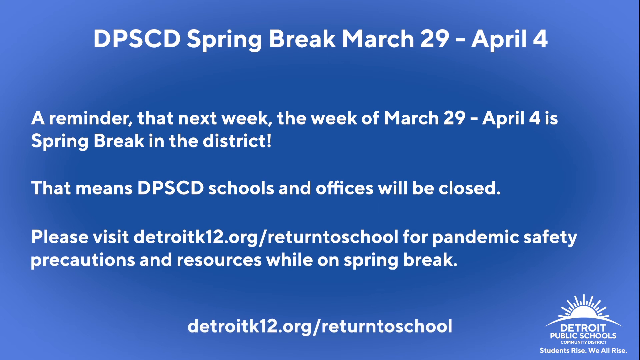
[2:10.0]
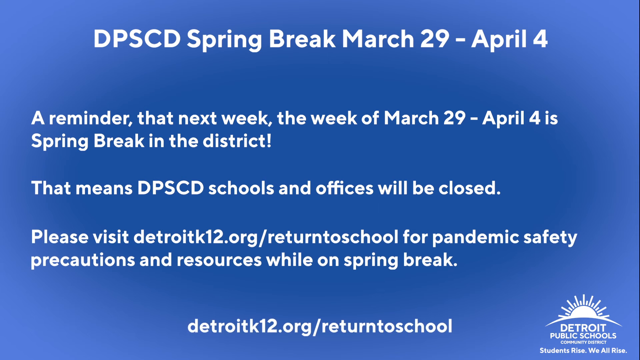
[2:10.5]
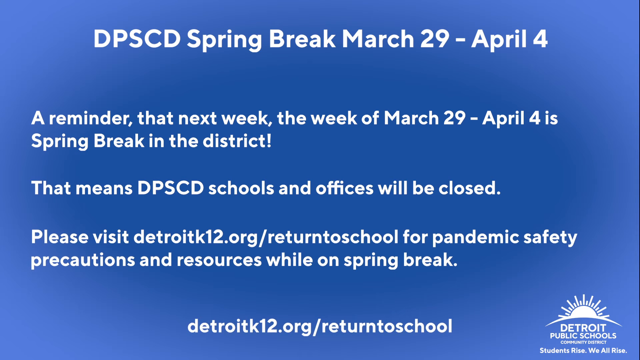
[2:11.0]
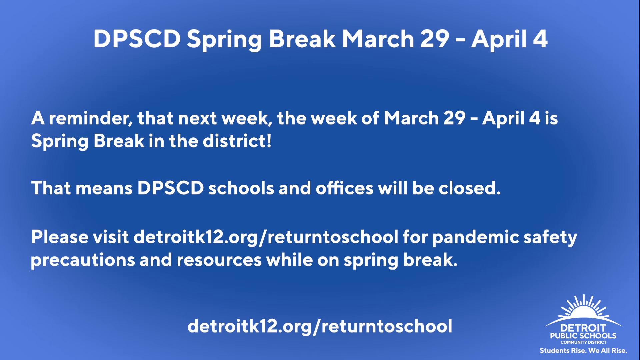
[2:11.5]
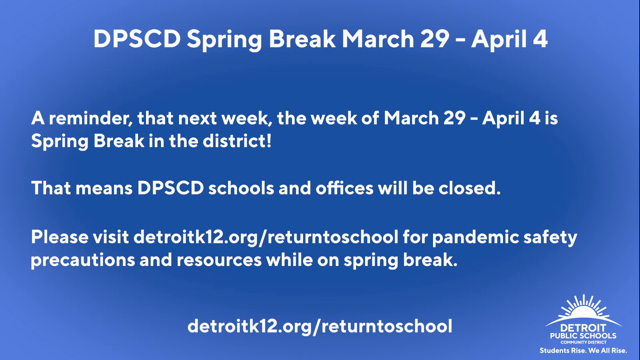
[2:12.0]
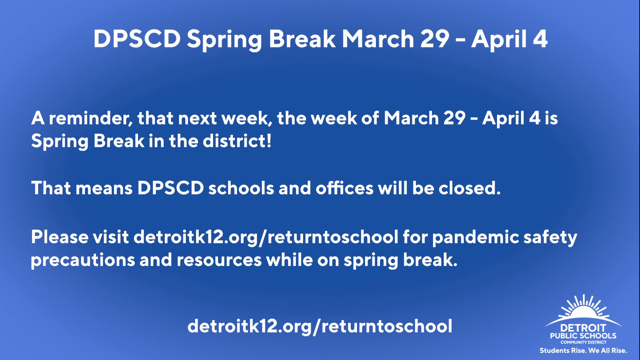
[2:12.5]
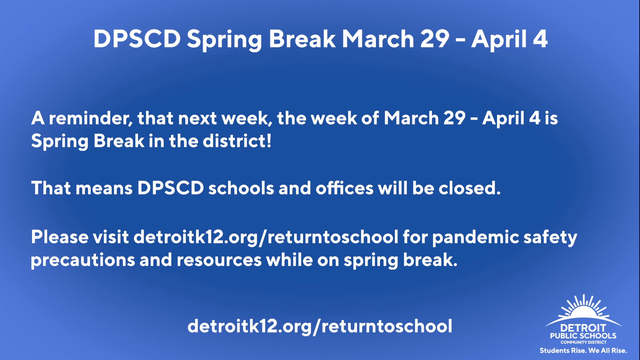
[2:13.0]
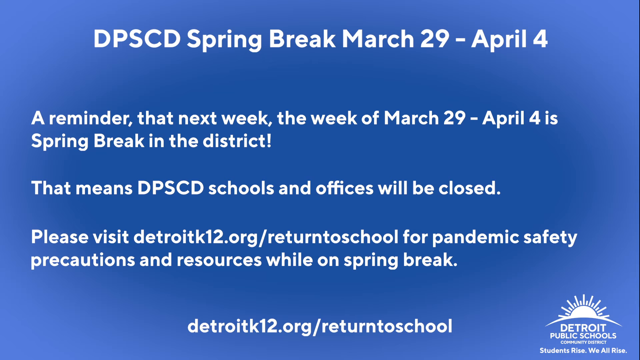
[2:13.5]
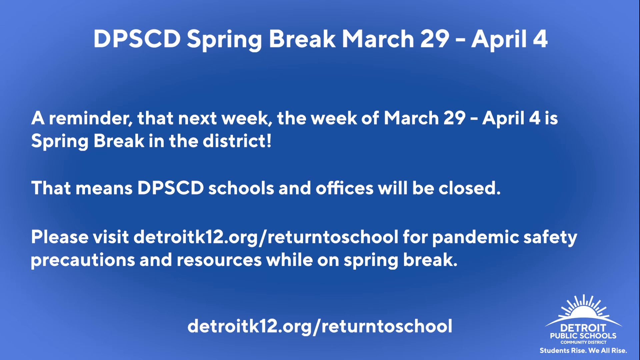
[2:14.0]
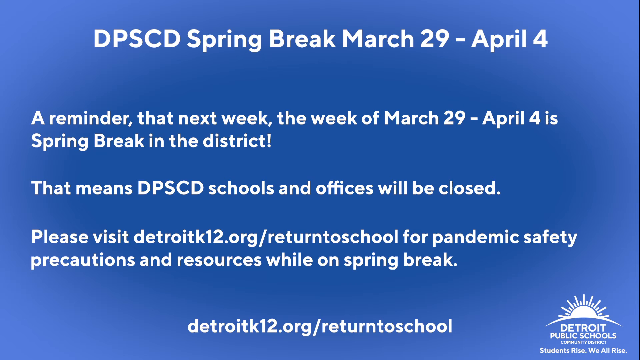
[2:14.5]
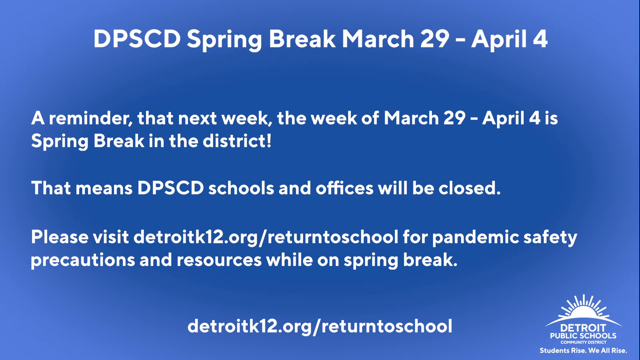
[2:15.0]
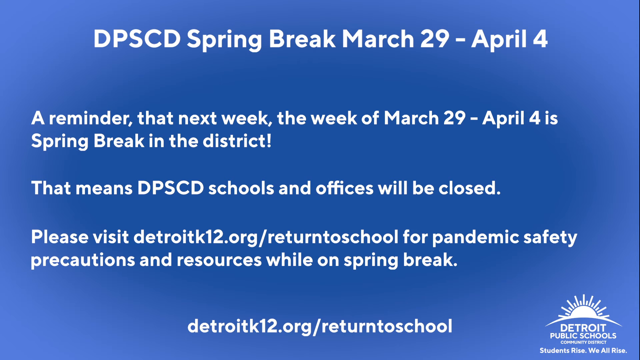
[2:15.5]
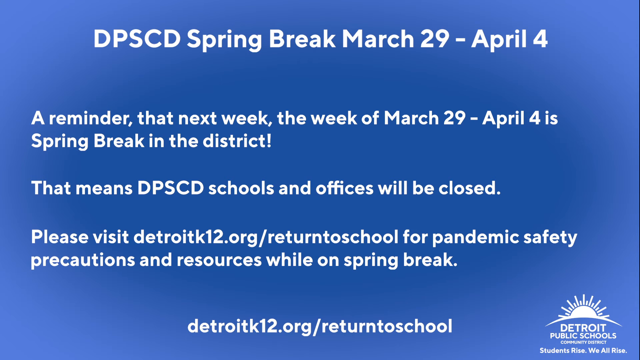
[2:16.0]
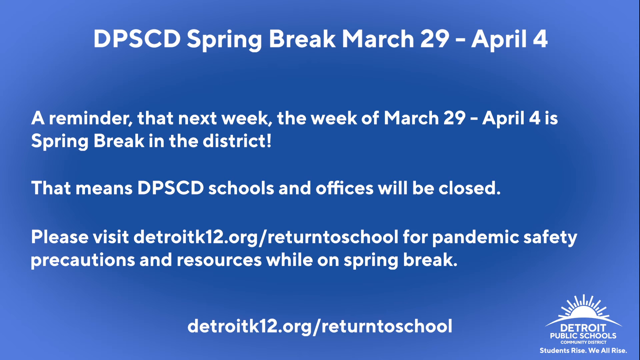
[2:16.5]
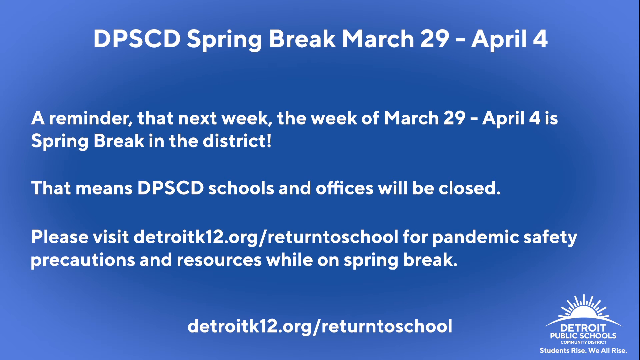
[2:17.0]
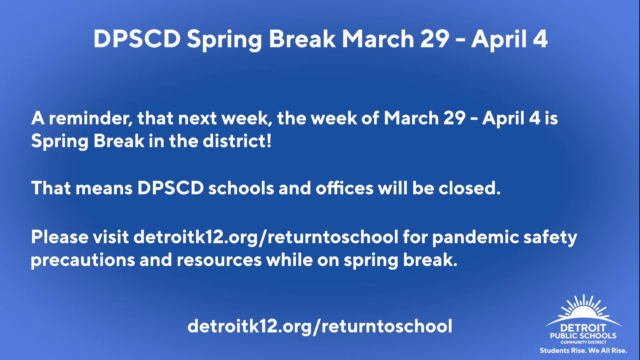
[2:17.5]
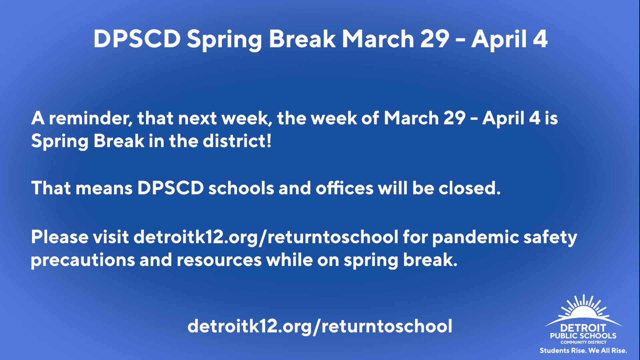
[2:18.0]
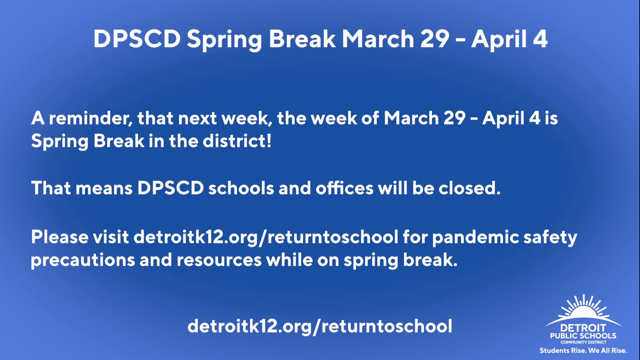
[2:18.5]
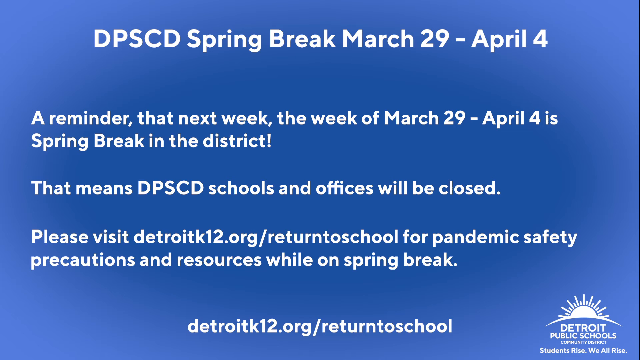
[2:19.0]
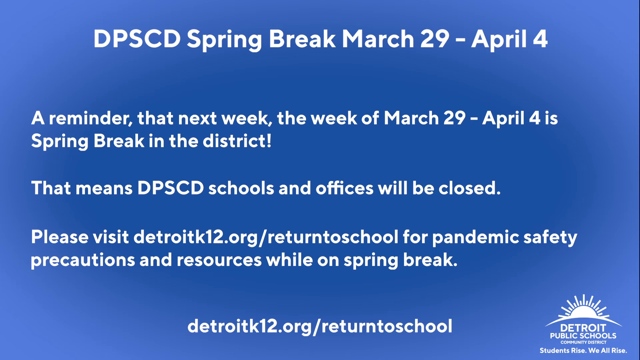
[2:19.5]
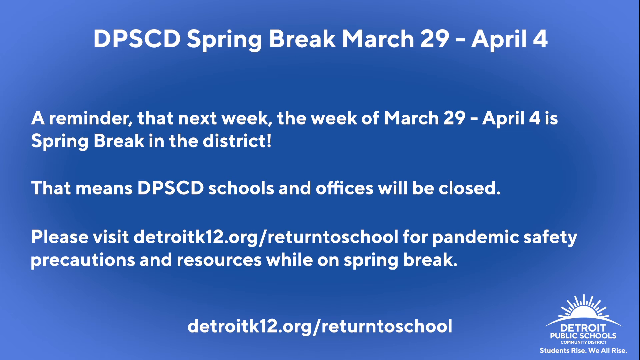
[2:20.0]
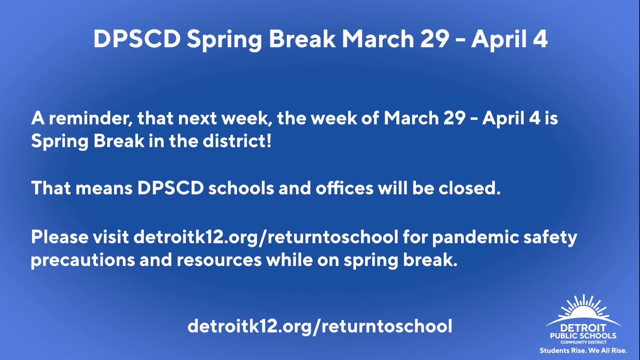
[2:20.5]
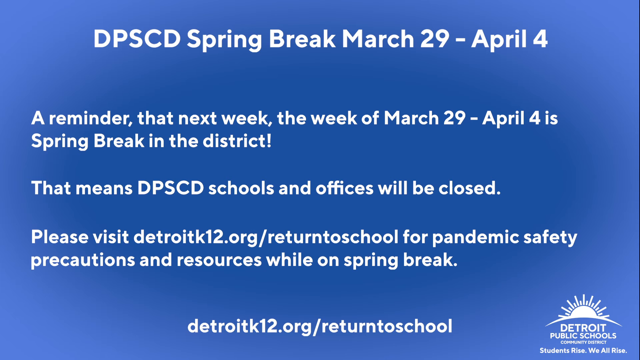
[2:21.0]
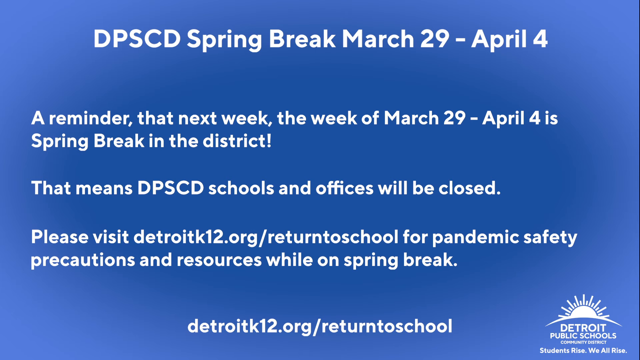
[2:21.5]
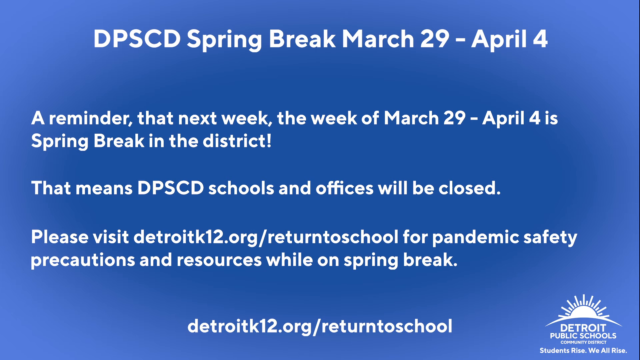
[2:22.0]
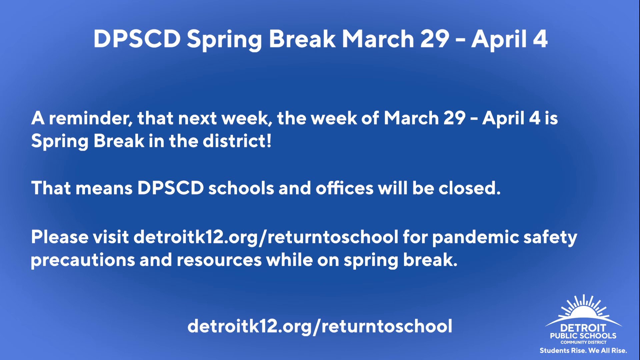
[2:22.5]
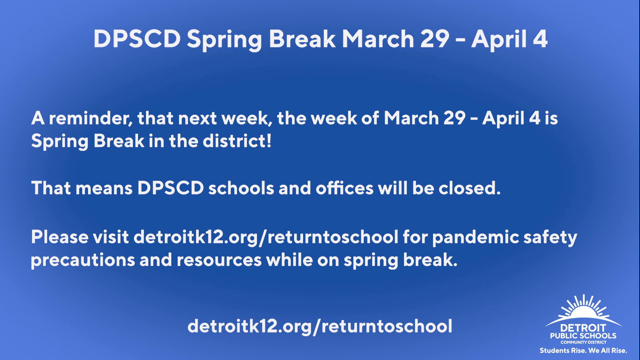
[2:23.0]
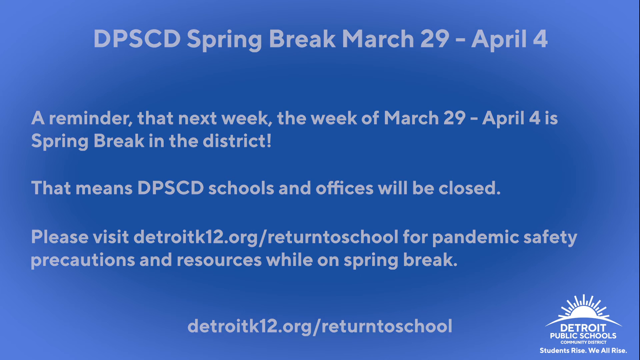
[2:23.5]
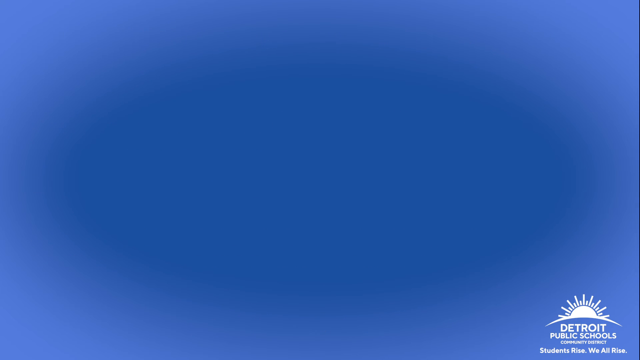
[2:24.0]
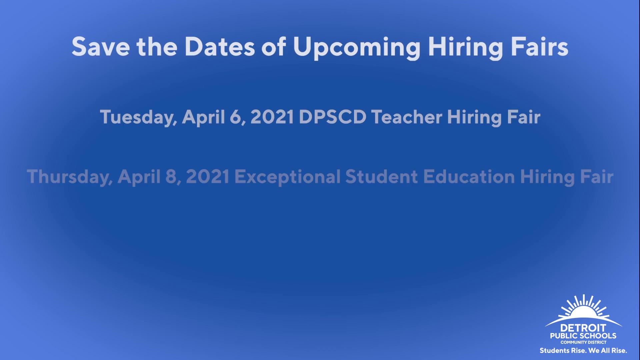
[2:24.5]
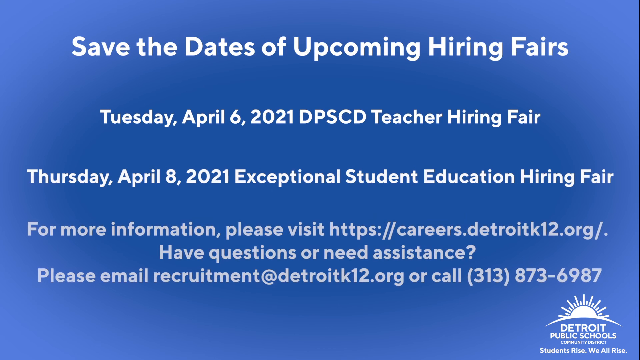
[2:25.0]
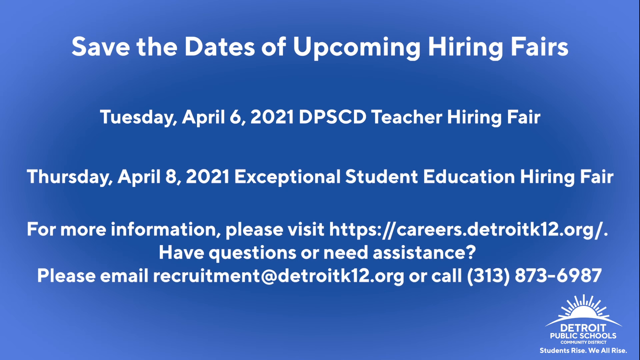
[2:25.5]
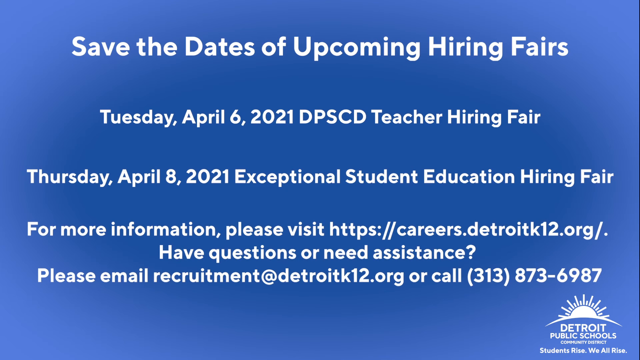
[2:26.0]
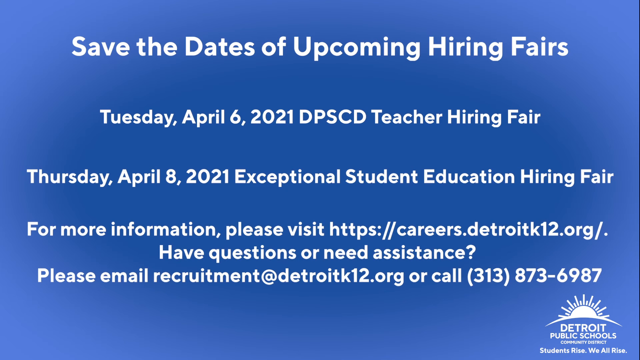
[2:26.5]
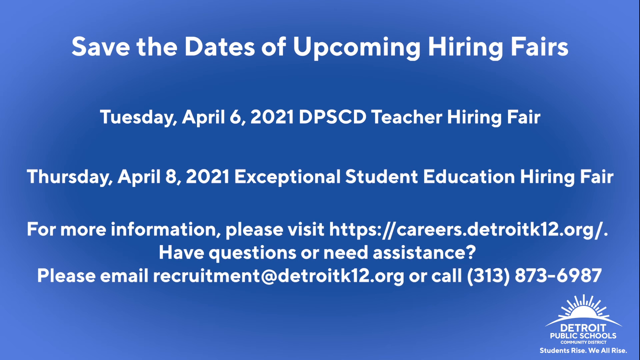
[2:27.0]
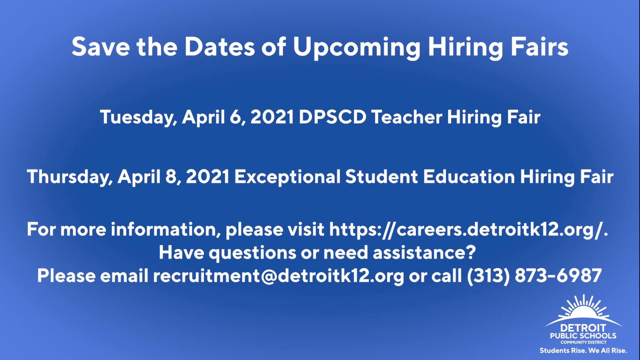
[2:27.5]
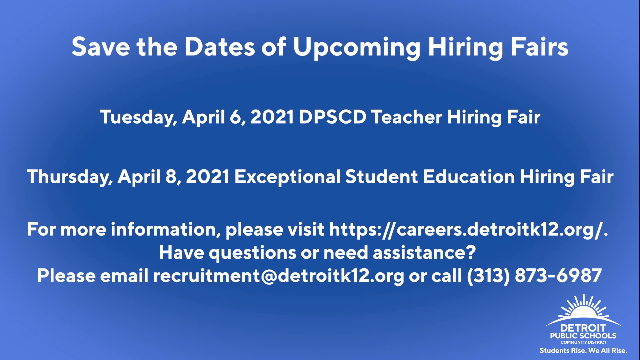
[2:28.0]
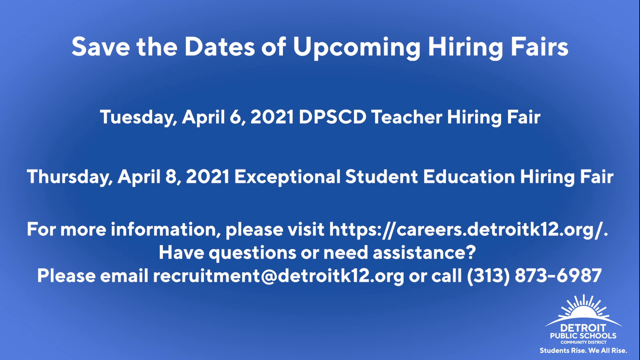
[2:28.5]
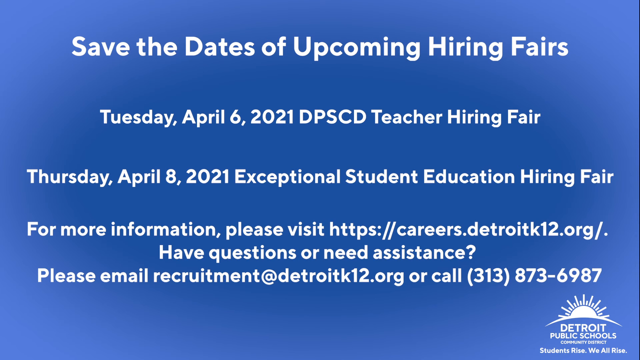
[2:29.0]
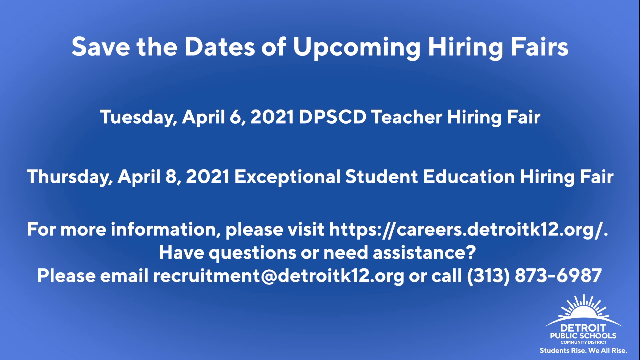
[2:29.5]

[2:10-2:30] The blue and white DPSCD Spring Break page remains on screen, allowing all the information about the dates and closings to be read, before transitioning to a new blue page with white writing that states "Save the Dates of Upcoming hiring fairs." Below that is "Tuesday, April 6, 2021 DPSCD Teacher Hiring Fair," and below that "Thursday, April 8, 2021 Exceptional Student Education Hiring Fair." Below those are a "For More Information" link and a "Have Questions or Need Assistance" link, followed by "Please email recruitment at DetroitK12.org or call 313-873-6987." Beside the "For More Information" link is a link that says "Visit https://detroitk12.org/." The background is blue, everything is written in white, and the Detroit Public Schools Community District logo is at the bottom right, with "students rise we all rise" below it.